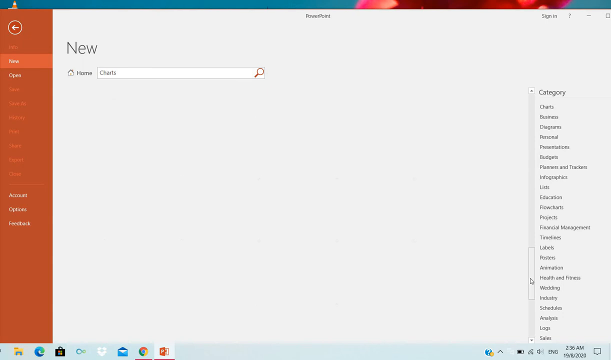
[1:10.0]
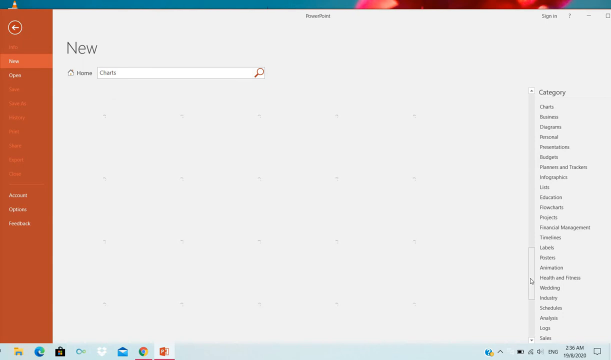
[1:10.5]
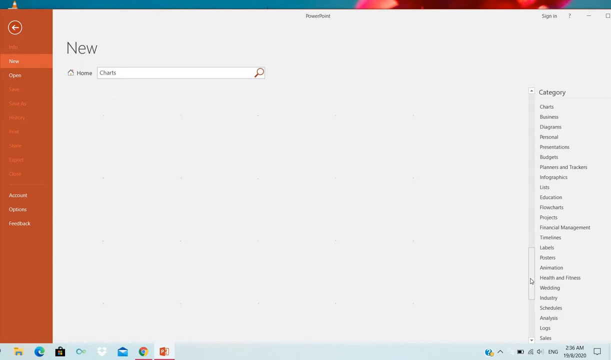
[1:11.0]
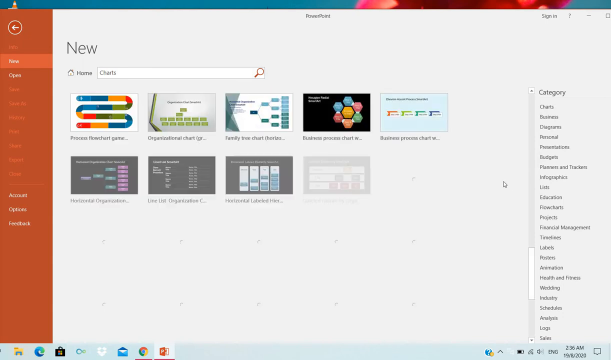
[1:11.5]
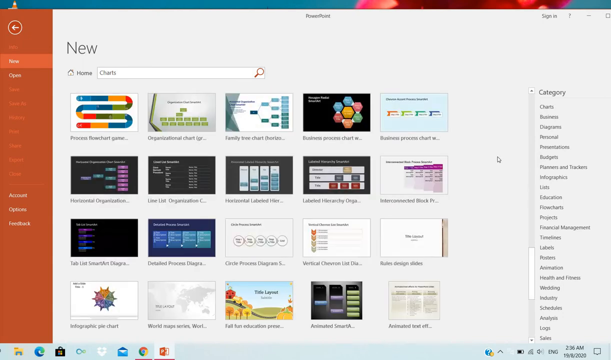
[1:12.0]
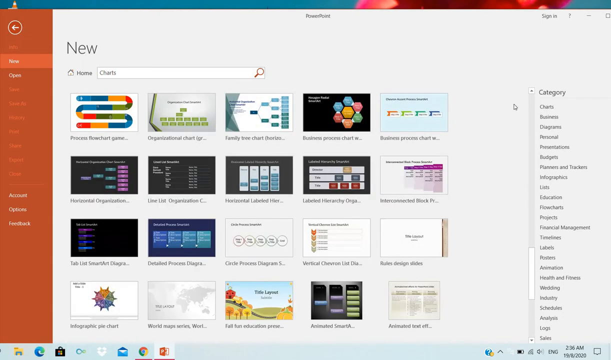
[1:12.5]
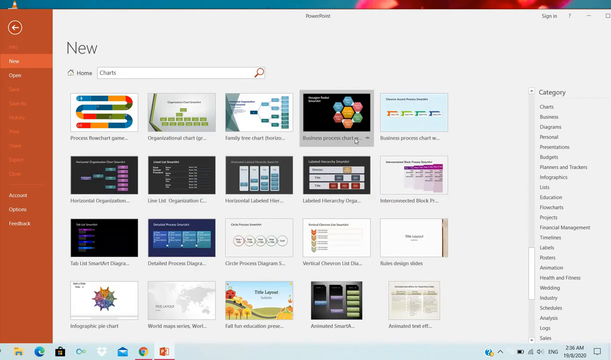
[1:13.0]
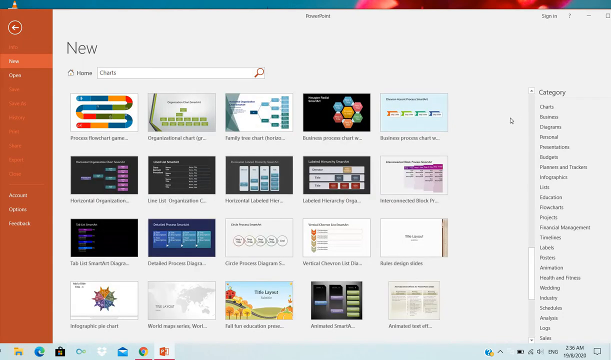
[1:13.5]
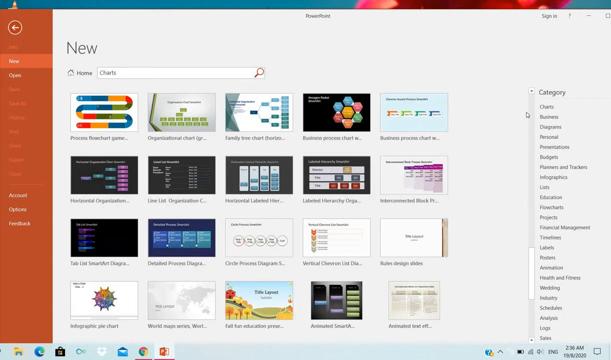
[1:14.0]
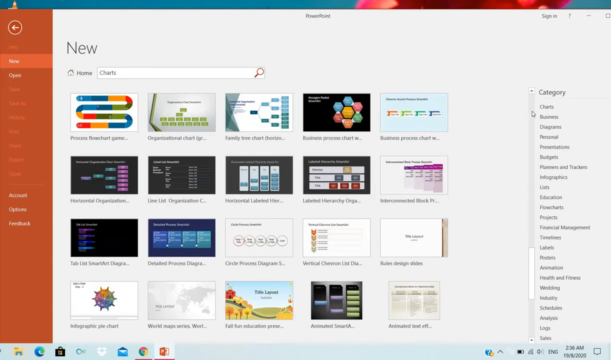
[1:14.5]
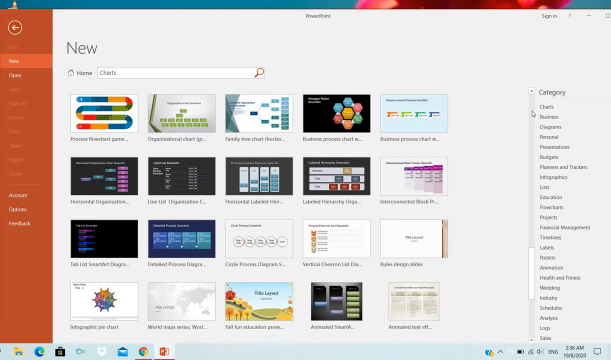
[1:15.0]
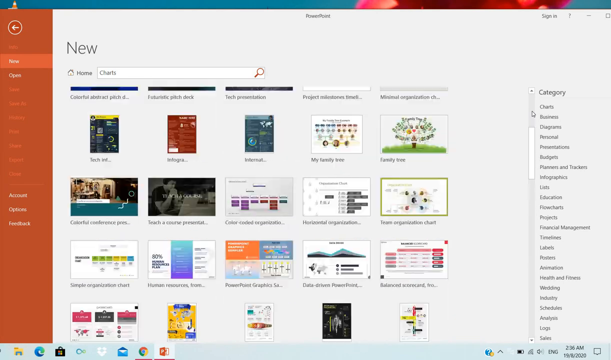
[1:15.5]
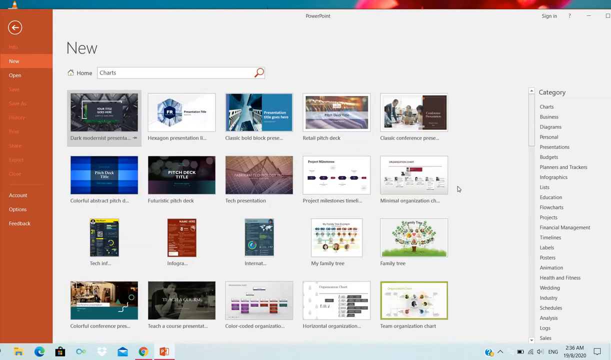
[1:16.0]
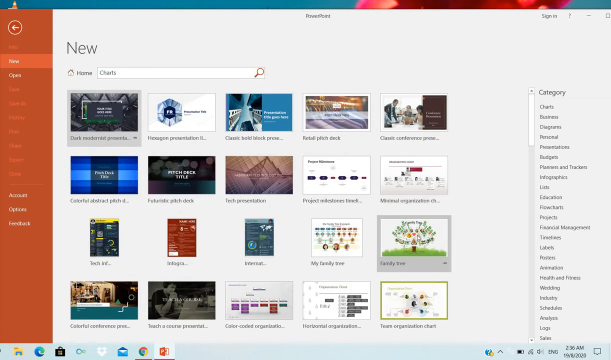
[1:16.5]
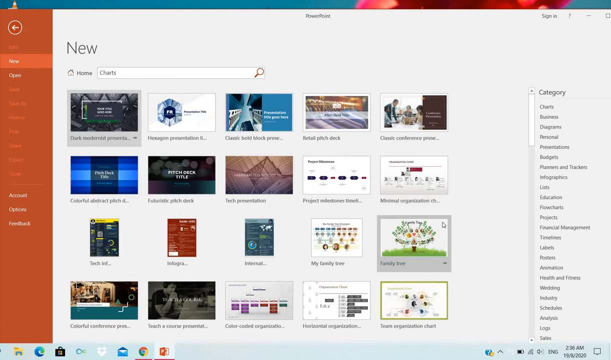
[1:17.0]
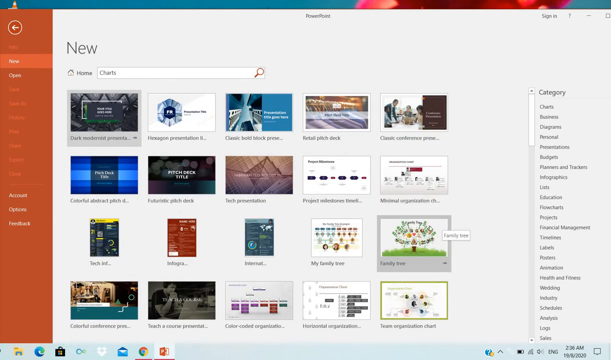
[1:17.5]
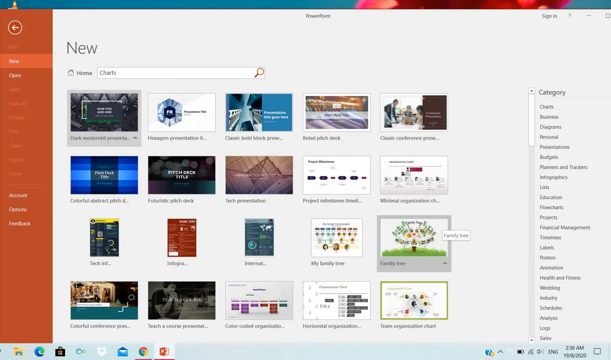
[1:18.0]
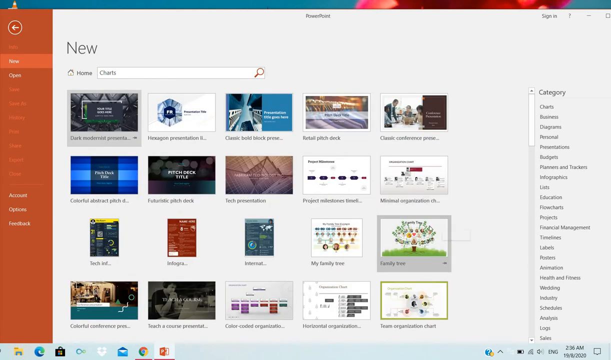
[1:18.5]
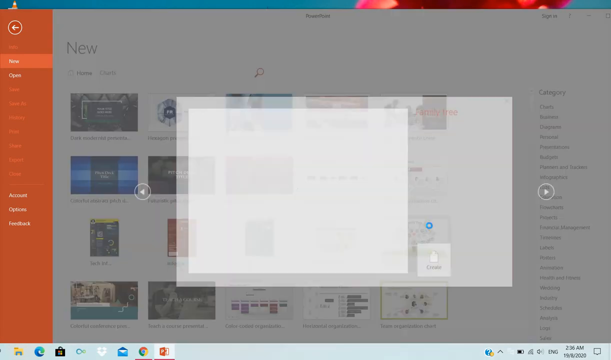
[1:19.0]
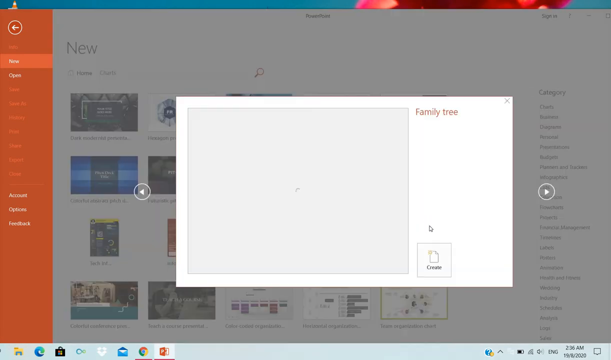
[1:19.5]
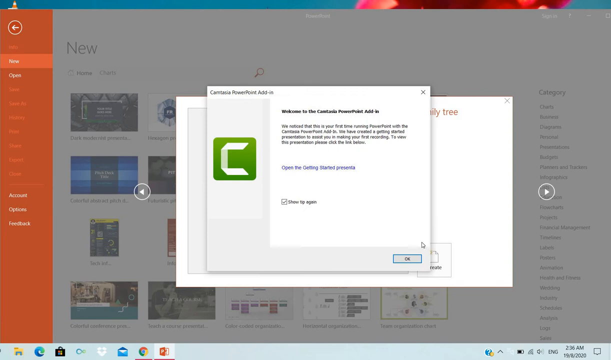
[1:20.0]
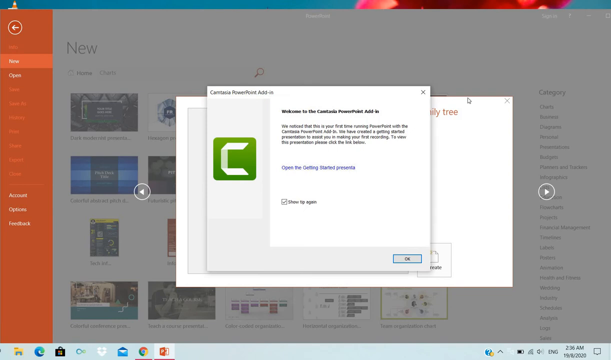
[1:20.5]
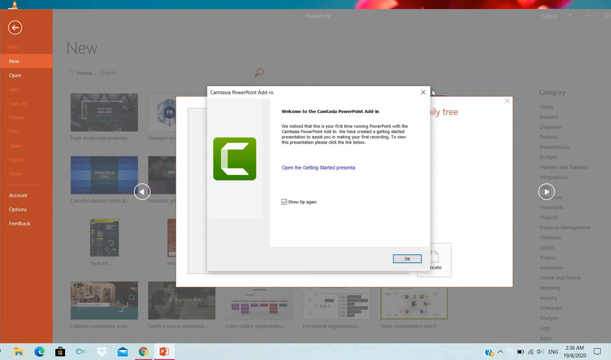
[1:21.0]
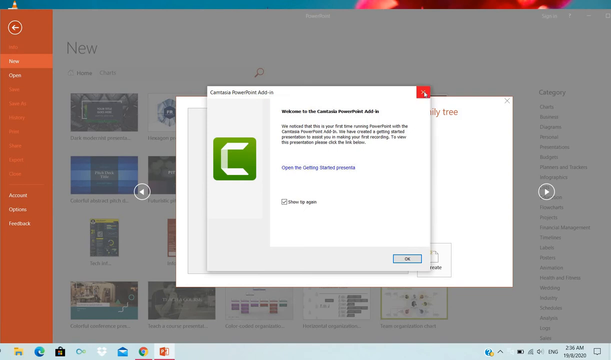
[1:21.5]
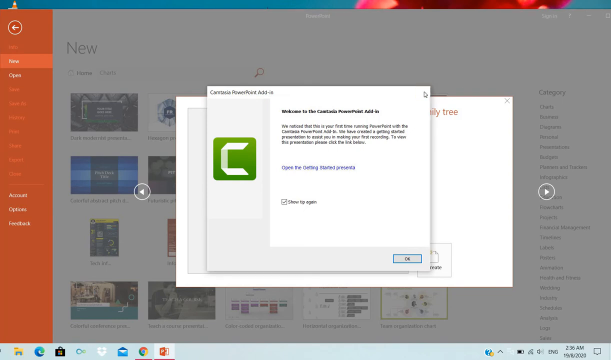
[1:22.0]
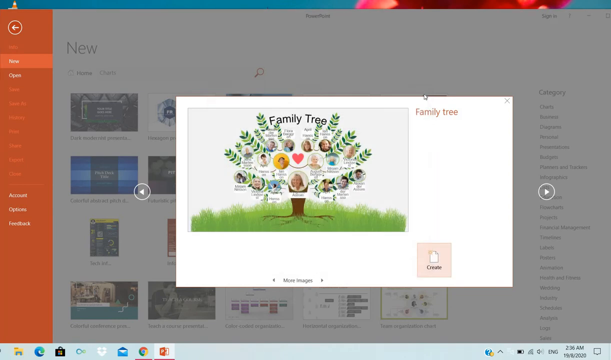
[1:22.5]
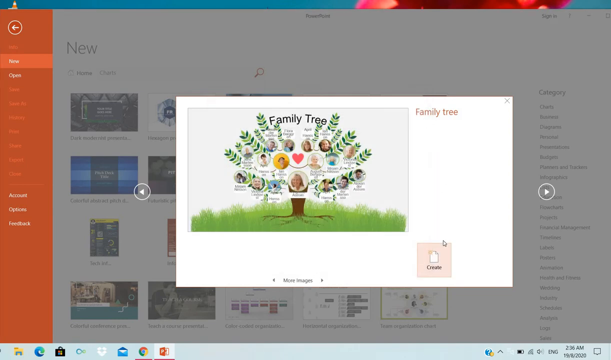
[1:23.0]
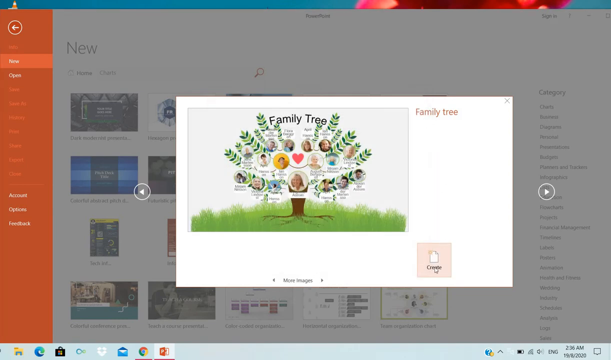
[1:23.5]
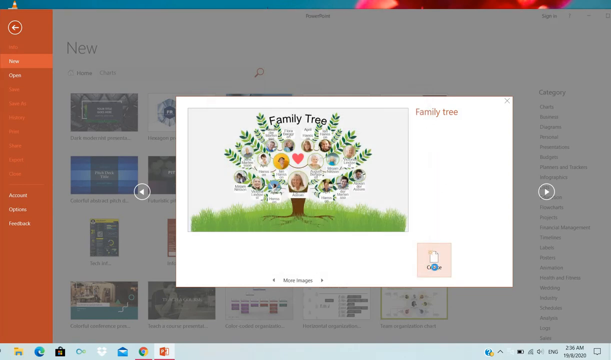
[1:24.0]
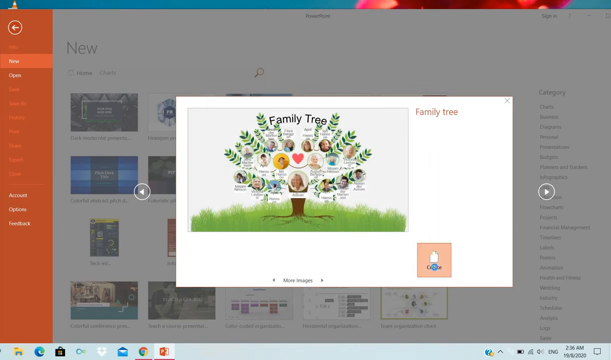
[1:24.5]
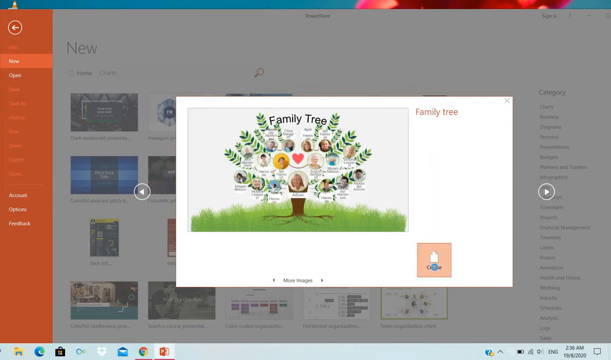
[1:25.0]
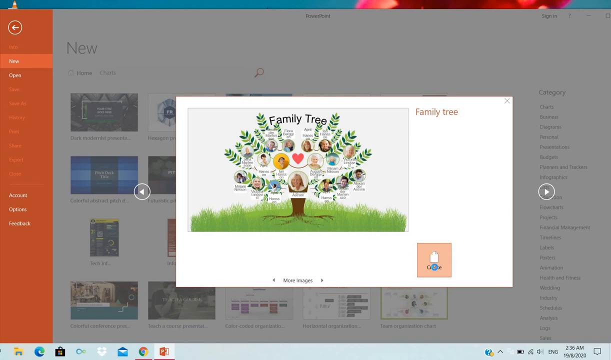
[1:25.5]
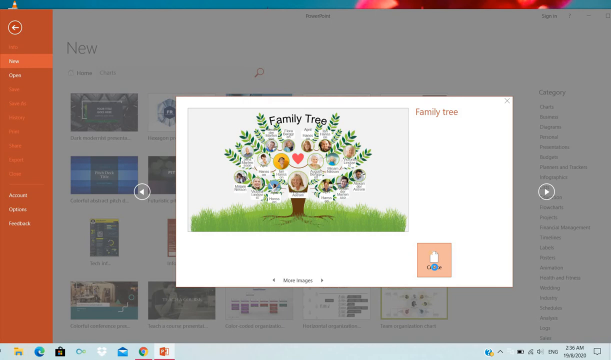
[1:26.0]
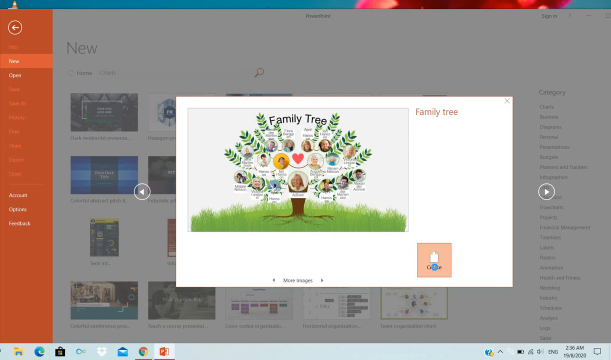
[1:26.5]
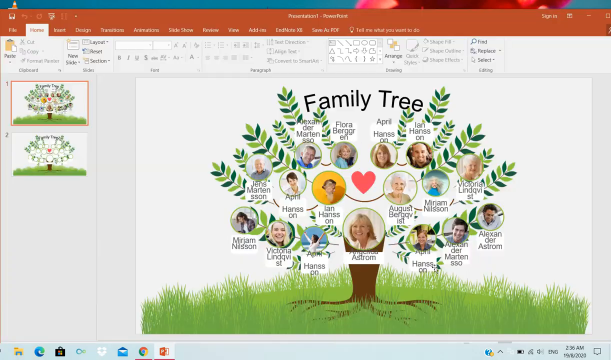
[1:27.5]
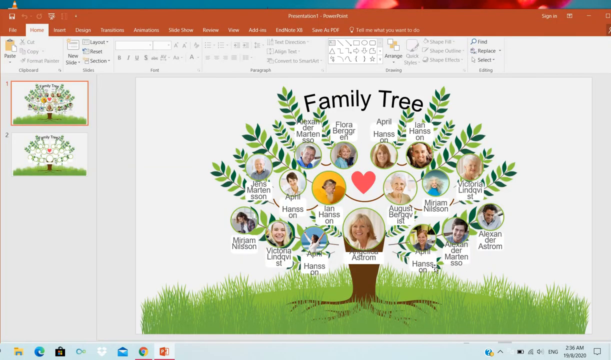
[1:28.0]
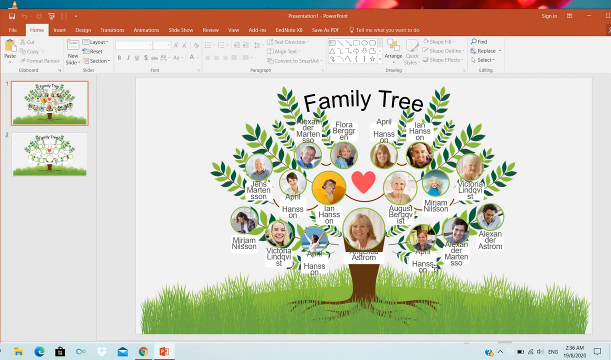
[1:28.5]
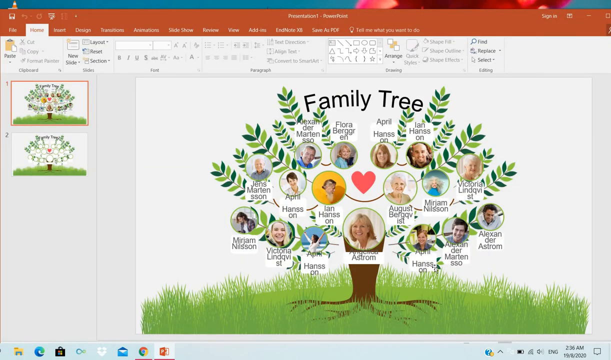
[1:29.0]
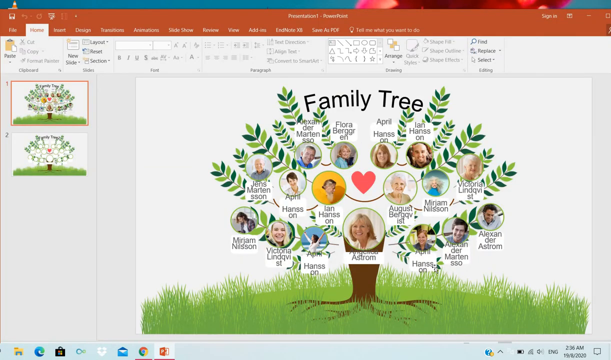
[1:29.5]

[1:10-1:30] The toggle is moved back upwards, and the person selects something about a tree, possibly a family tree. A pop-up appears in the foreground over the template selection, welcoming the user to a PowerPoint add-on. The add-on is represented by a green square containing what looks like a white letter C drawn in a squarish fashion. The person closes the pop-up without clicking OK, selects the template and creates a new family tree. The first slide of this family tree already contains names and pictures of people.